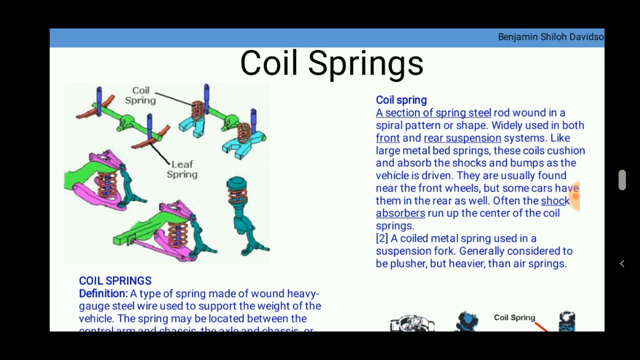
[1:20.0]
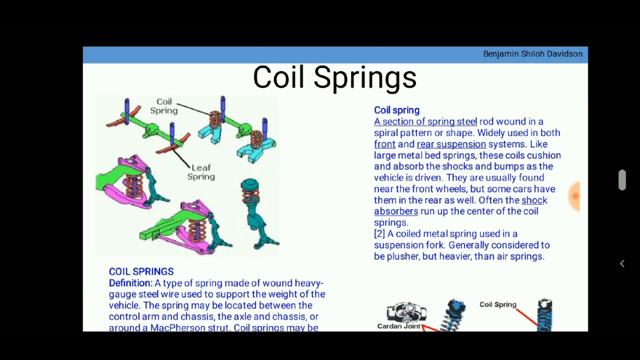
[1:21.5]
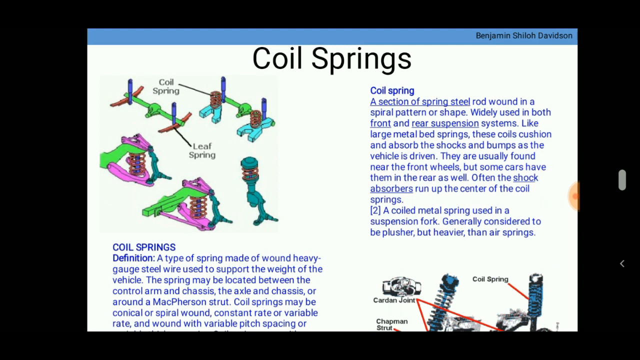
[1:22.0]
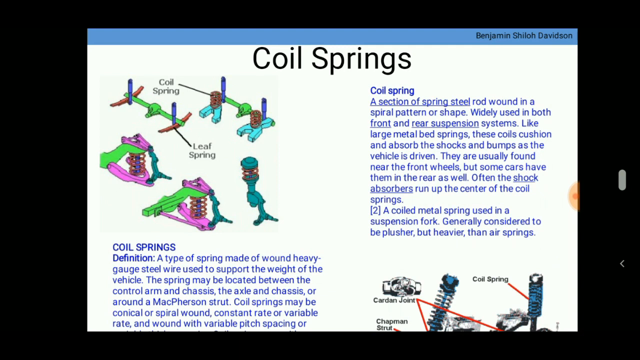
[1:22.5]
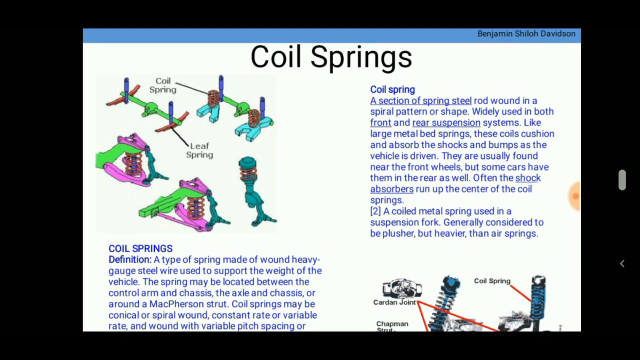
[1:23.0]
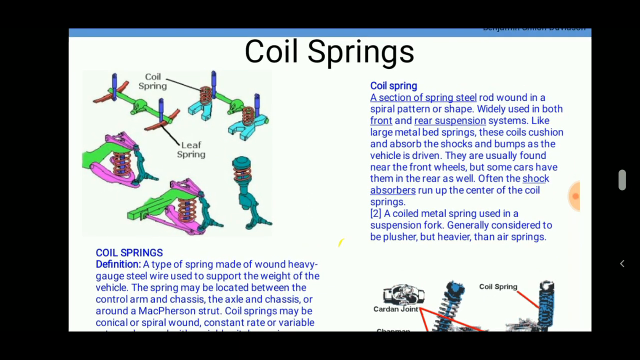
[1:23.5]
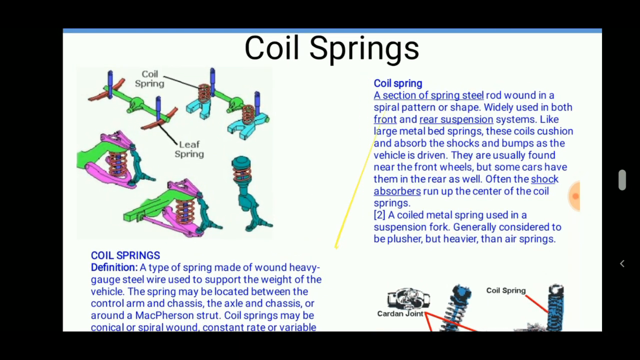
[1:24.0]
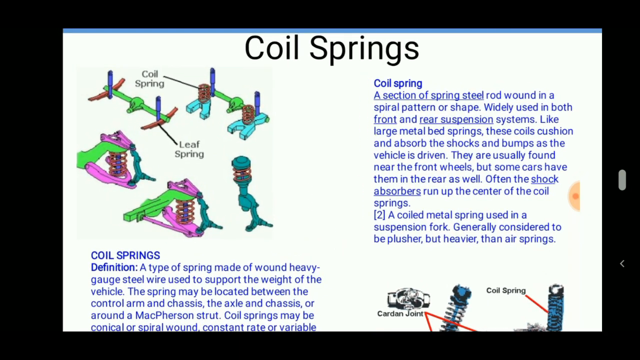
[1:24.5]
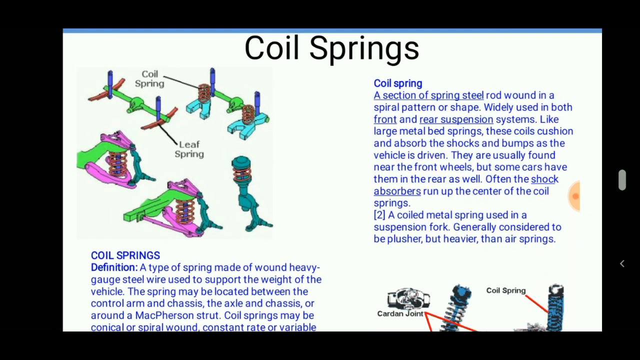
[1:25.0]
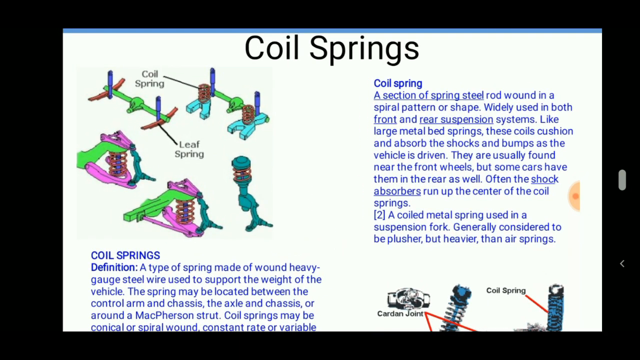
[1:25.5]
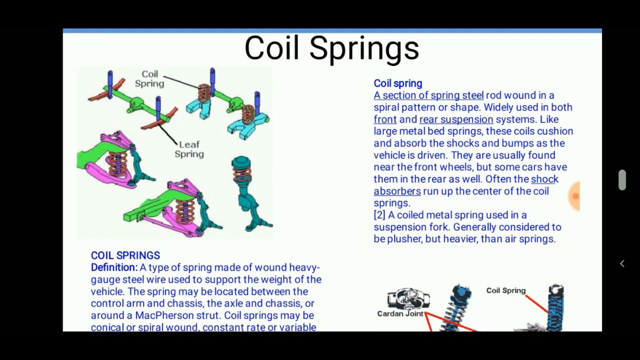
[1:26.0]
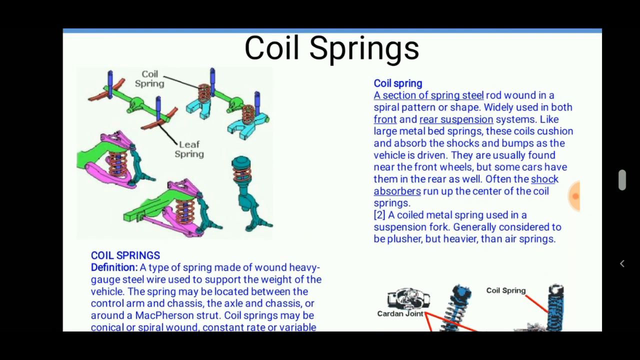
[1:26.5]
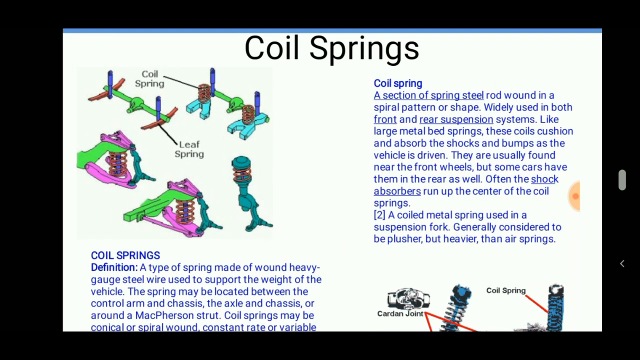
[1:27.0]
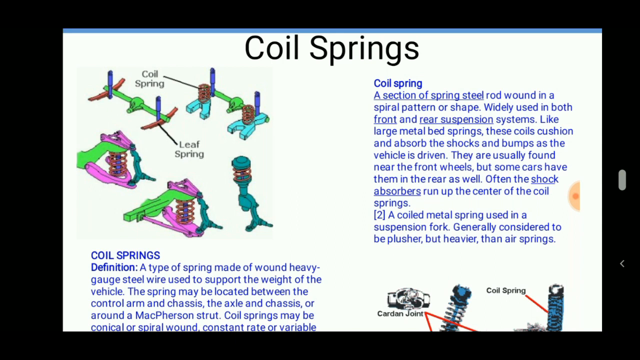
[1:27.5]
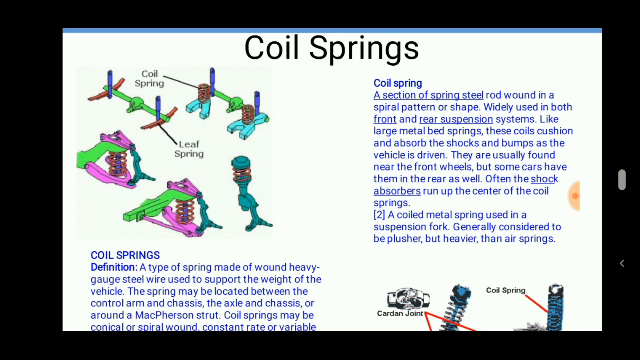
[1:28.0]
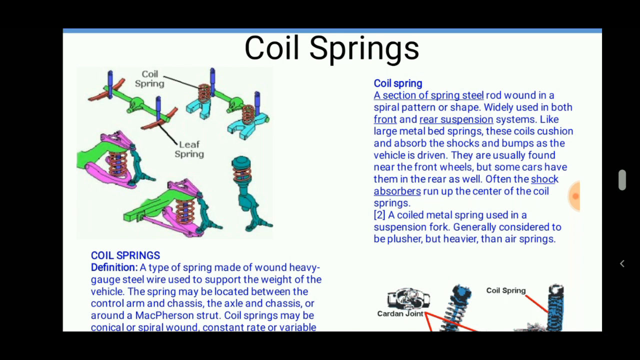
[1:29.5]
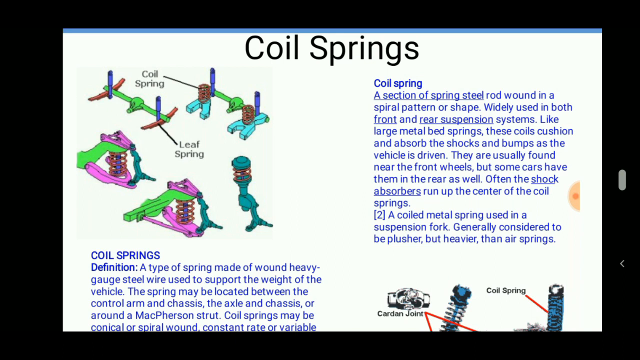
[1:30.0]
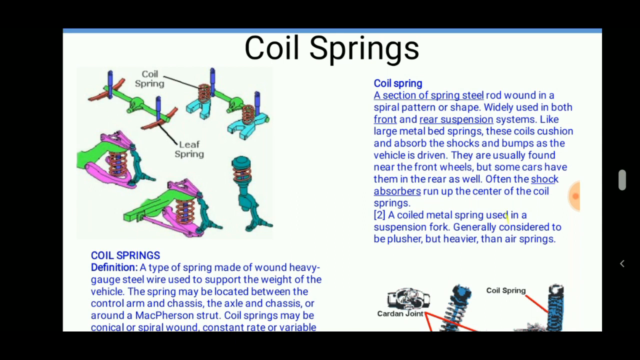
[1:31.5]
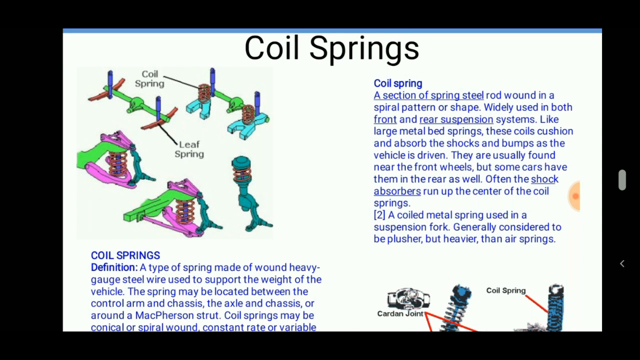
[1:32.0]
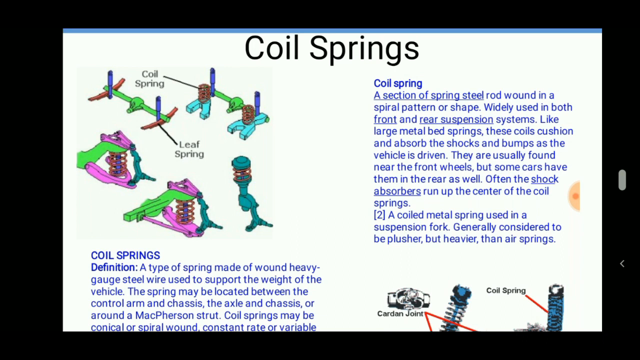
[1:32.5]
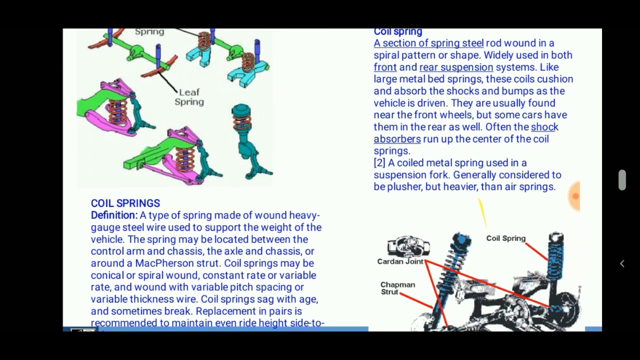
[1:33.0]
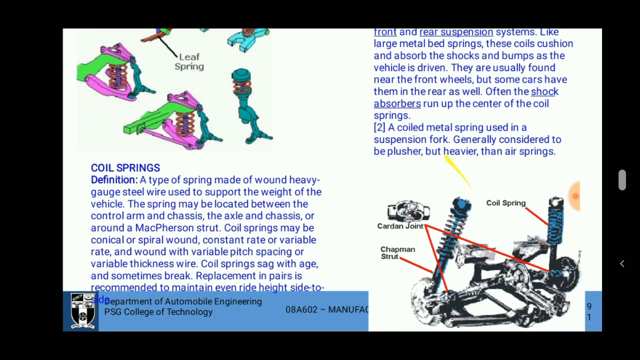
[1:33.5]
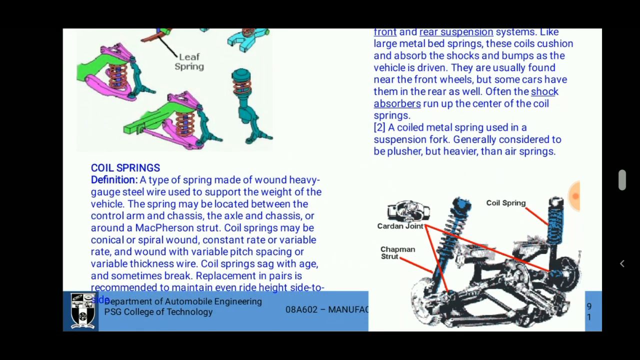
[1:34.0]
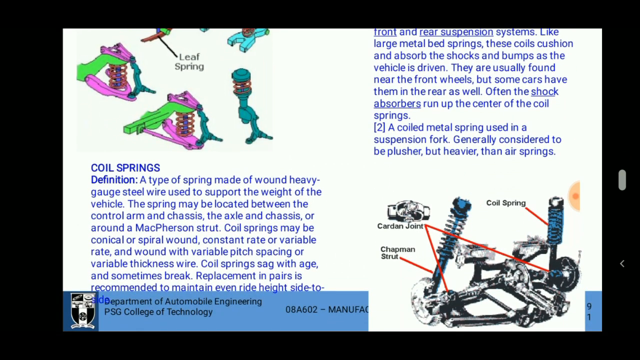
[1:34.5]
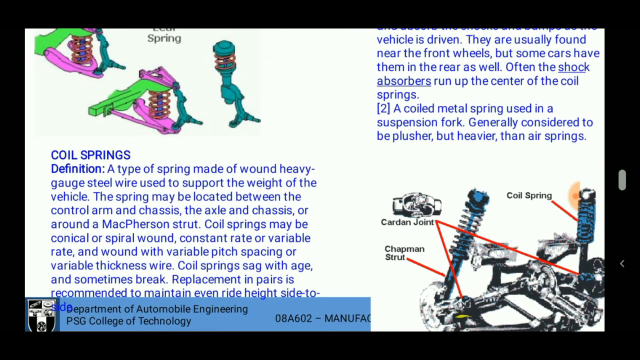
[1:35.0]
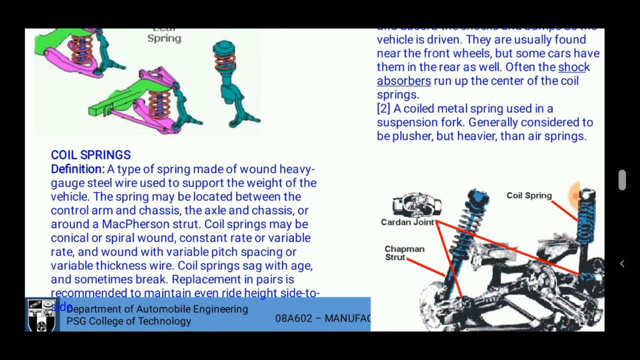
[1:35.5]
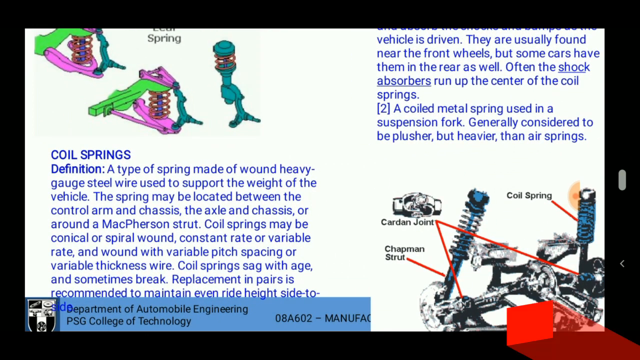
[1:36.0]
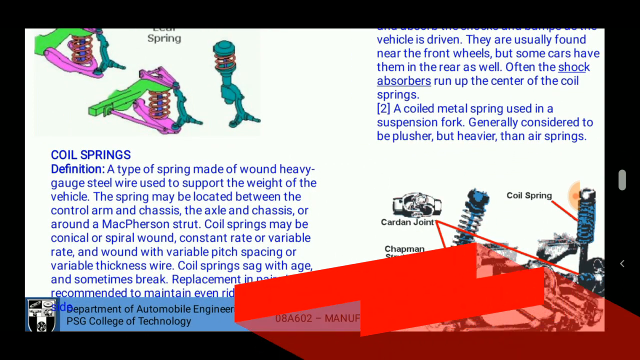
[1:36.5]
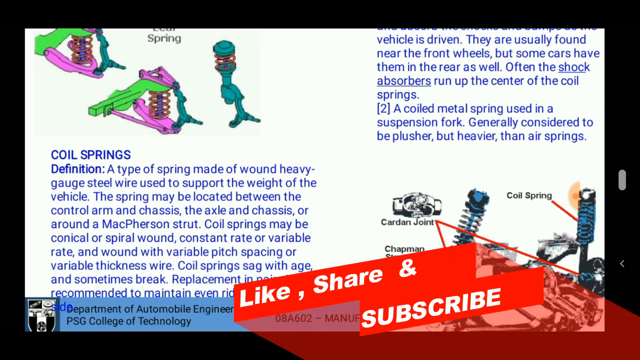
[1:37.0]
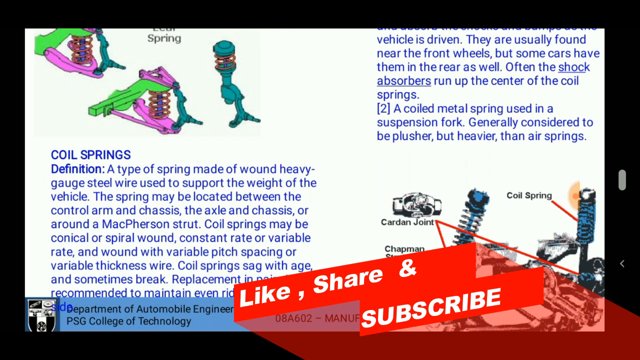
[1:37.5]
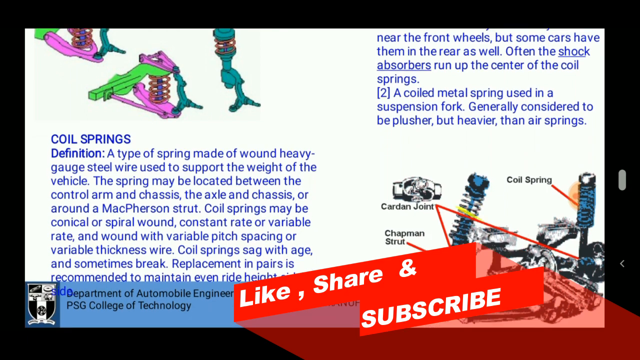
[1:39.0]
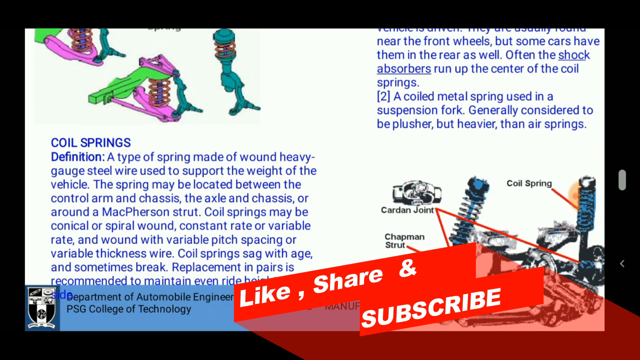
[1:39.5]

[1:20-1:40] Diagrams show a leaf spring and a coil spring, along with springs and some balls put together and joined by the springs. Text defines a coil spring as a section of spring steel wound in a spiral pattern or shape widely used in both front and rear suspension systems, and a coiled metal spring used in a suspension fork, generally considered plusher but heavier. A man explains while showing diagrams drawn on the other side, moving up and down, and points out the link between each of the parts of the coil springs and the balls shown.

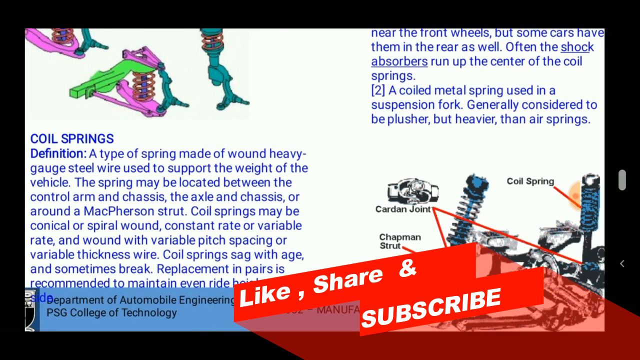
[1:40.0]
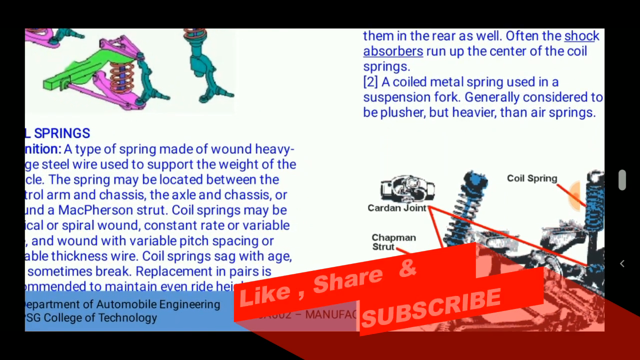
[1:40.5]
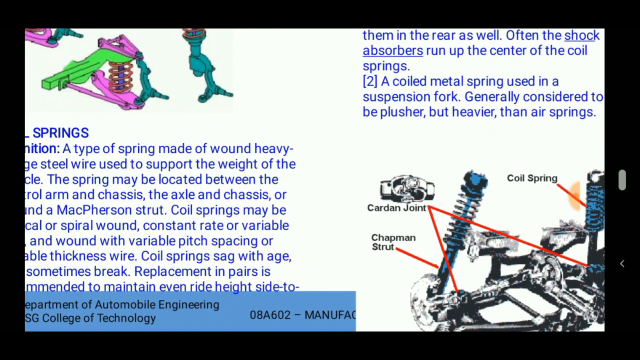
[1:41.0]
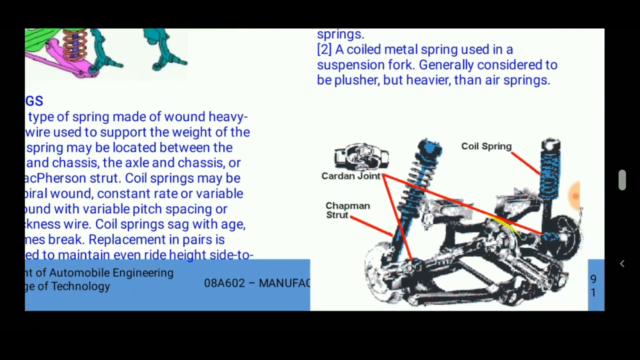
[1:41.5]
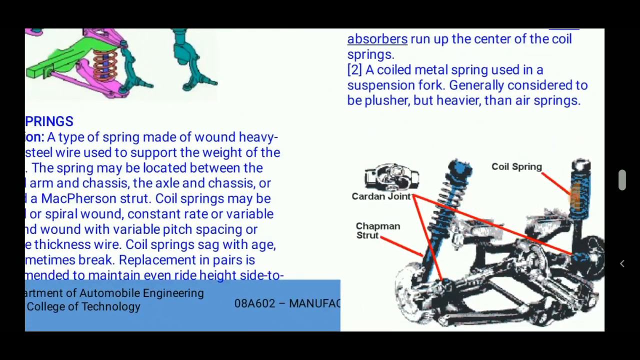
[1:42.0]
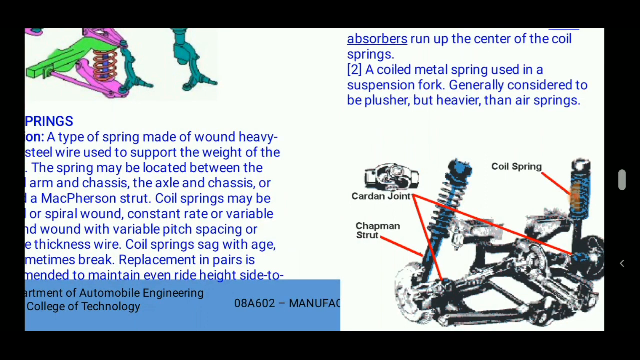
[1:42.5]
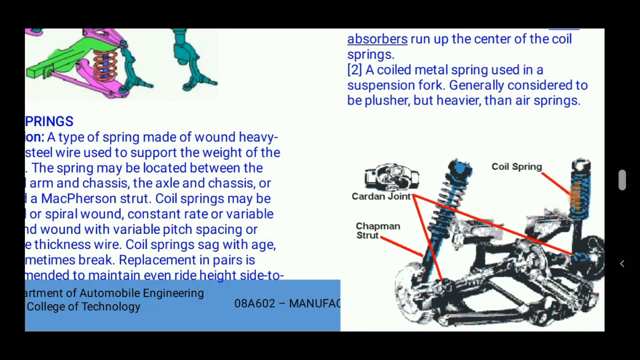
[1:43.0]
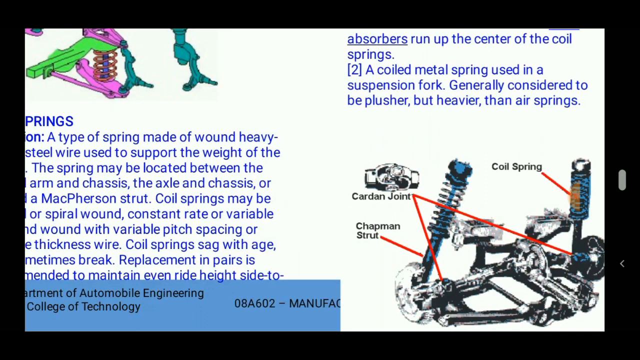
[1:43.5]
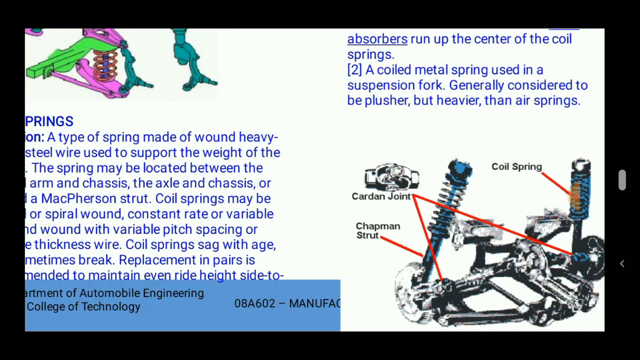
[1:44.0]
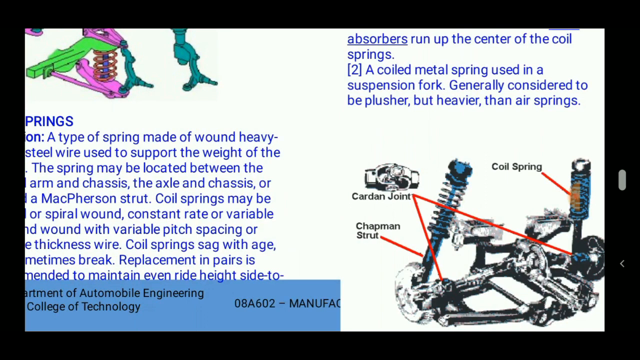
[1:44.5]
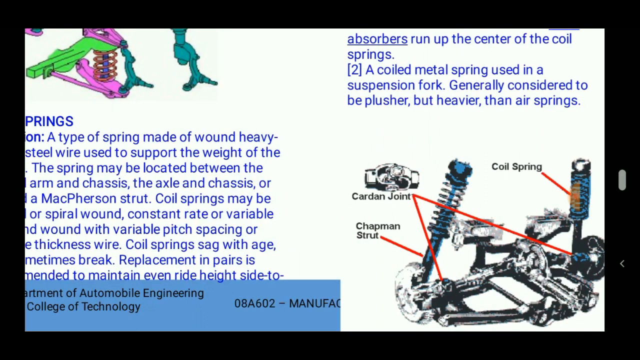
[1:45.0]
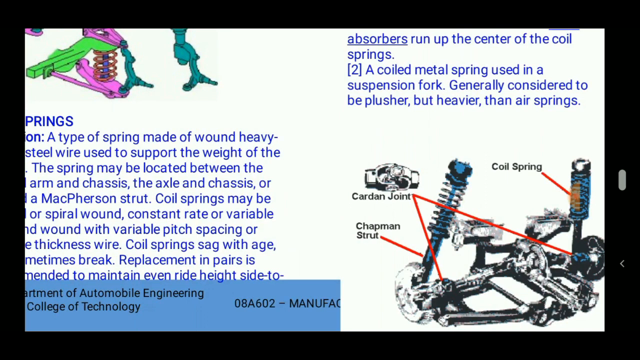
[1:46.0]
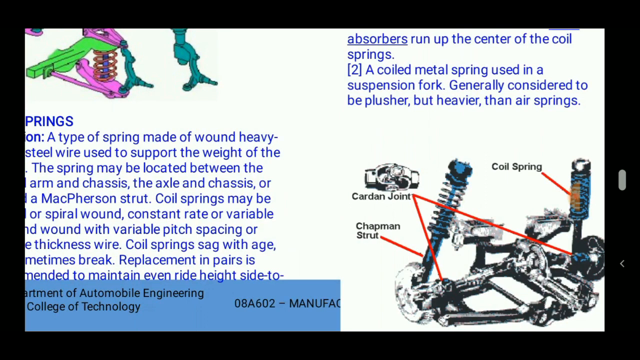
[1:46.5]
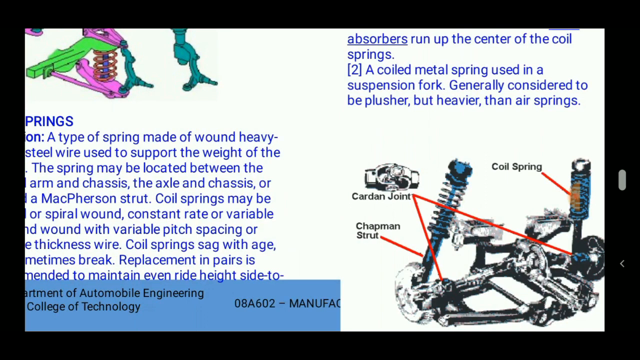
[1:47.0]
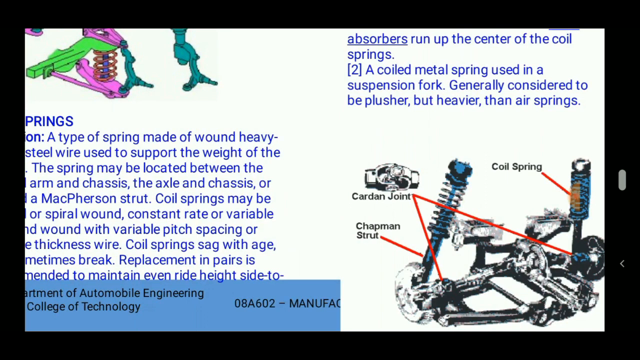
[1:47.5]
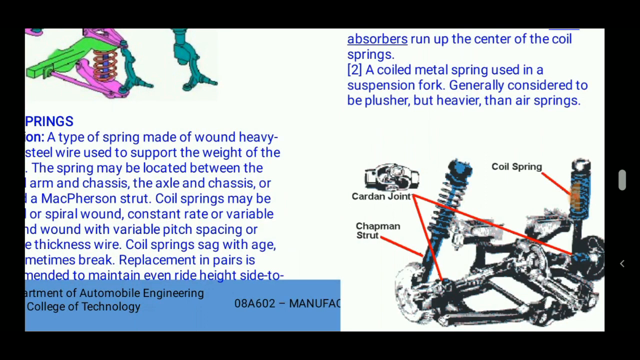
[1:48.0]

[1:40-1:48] A diagram shows a cut joint, a Chapman strut and a coil, showing the relationship between the joints, the struts and the coil spring. The material is identified as study material for engineering from the Department of Automobile Engineering, PSG College of Technology. The video ends with a like, share and subscribe message.